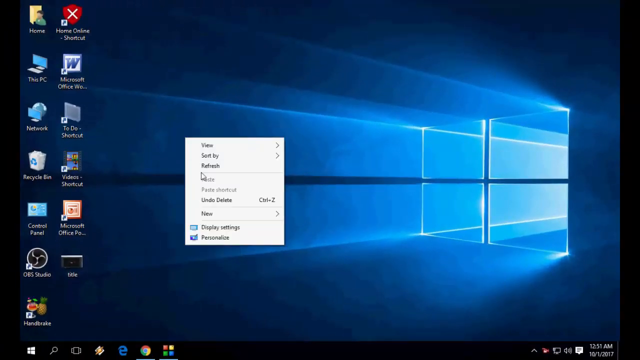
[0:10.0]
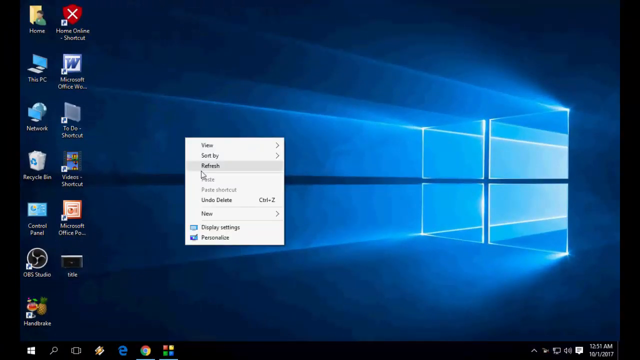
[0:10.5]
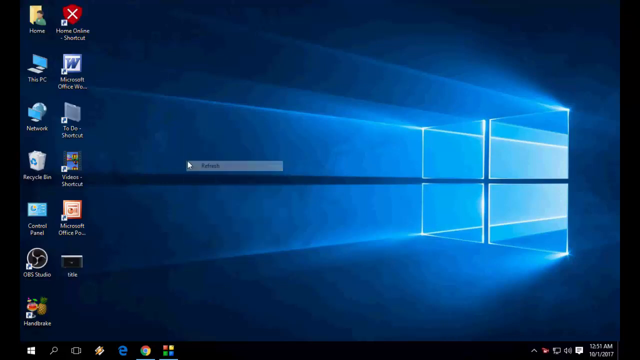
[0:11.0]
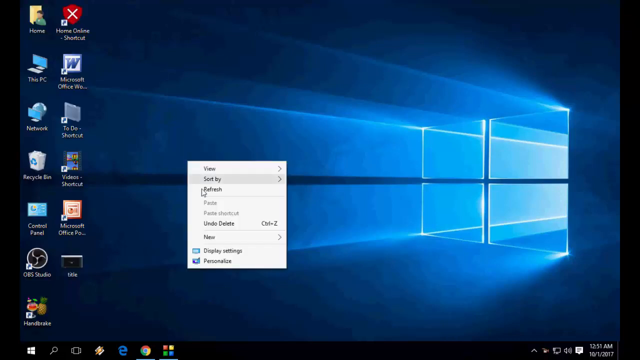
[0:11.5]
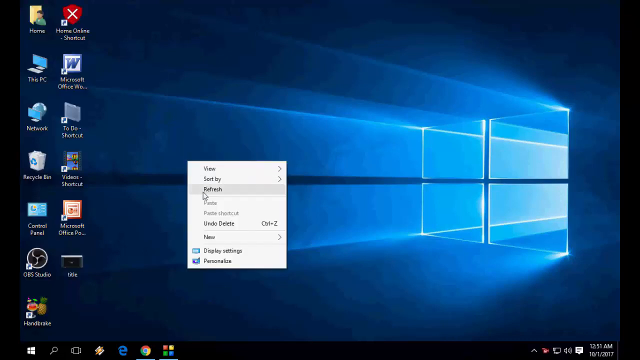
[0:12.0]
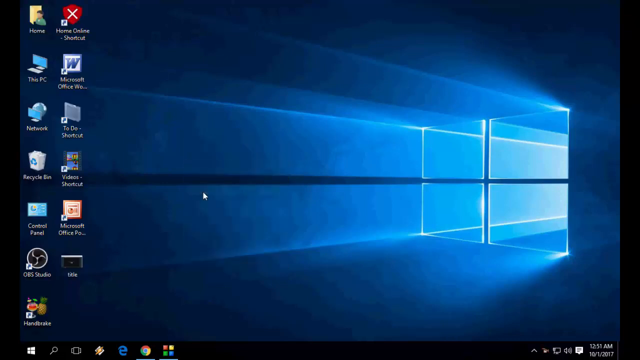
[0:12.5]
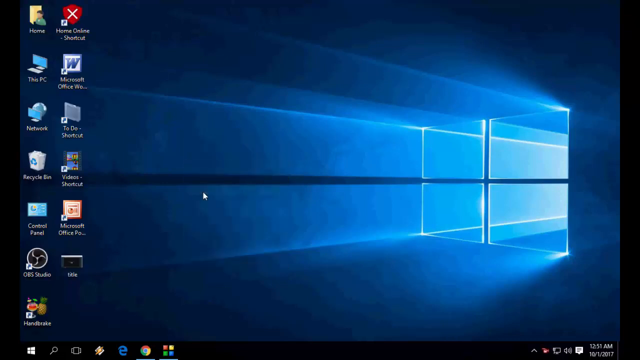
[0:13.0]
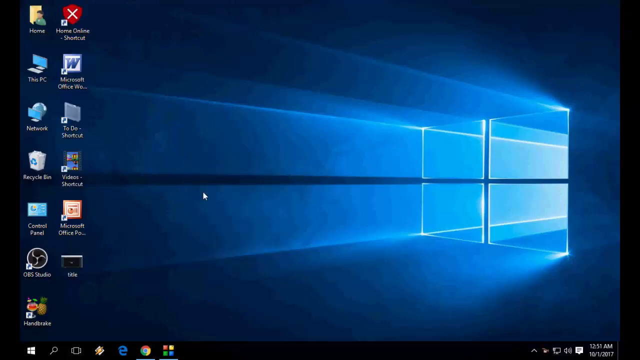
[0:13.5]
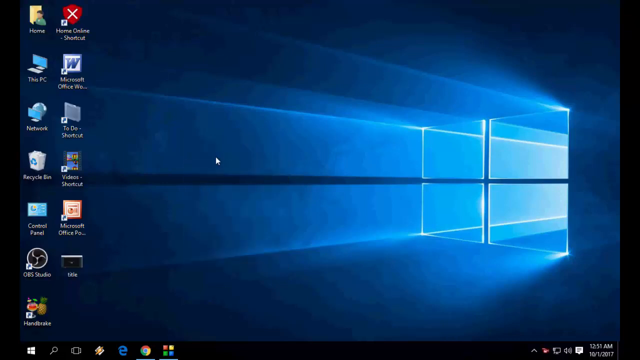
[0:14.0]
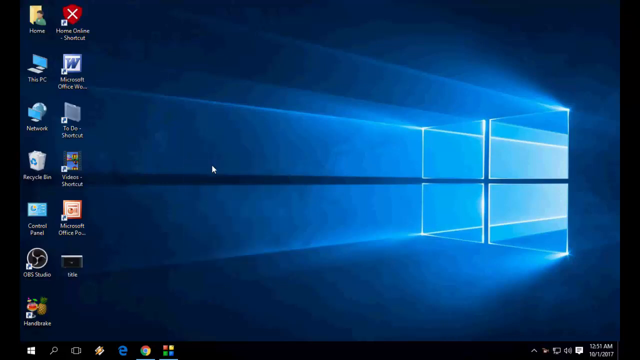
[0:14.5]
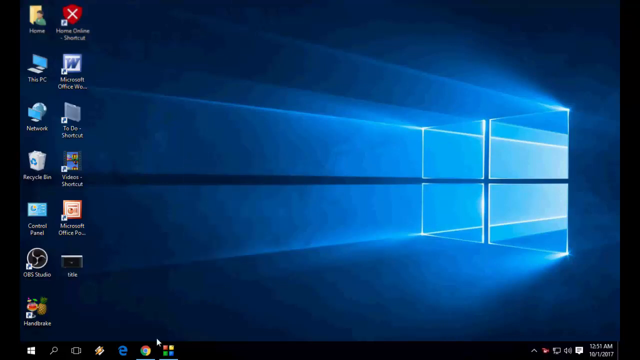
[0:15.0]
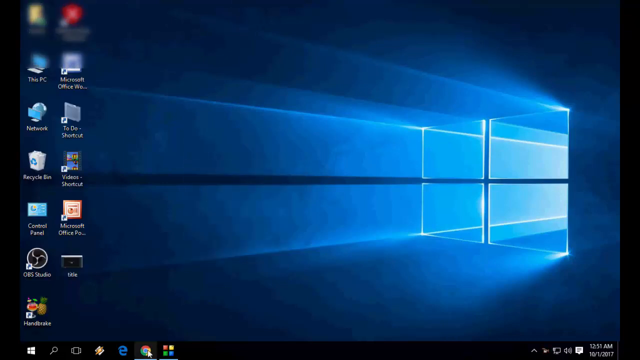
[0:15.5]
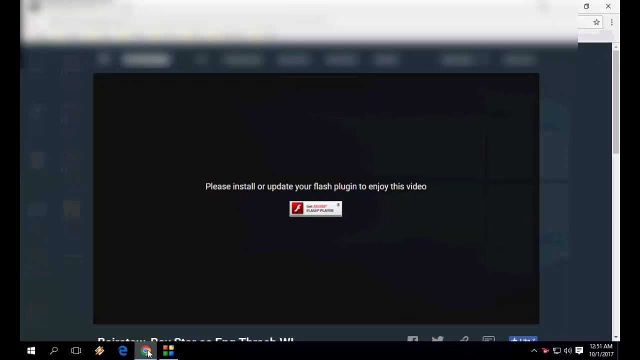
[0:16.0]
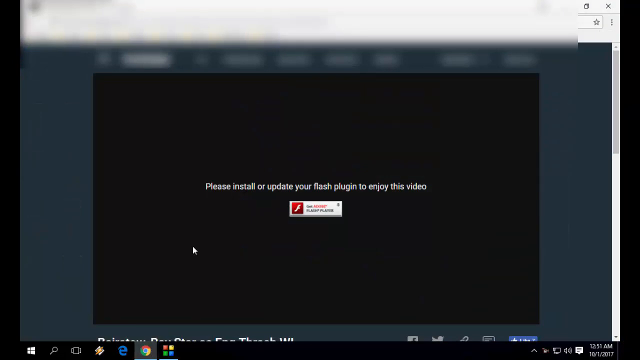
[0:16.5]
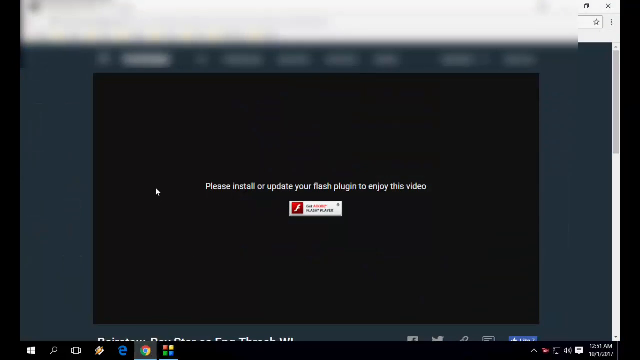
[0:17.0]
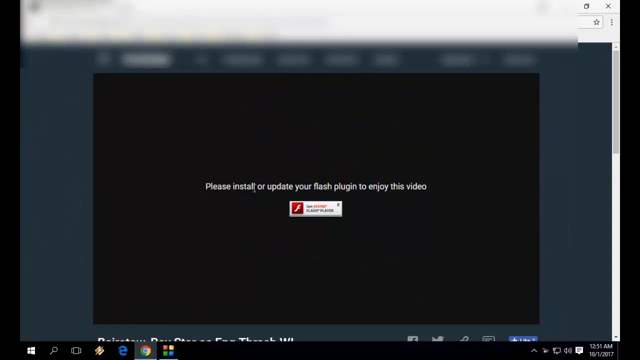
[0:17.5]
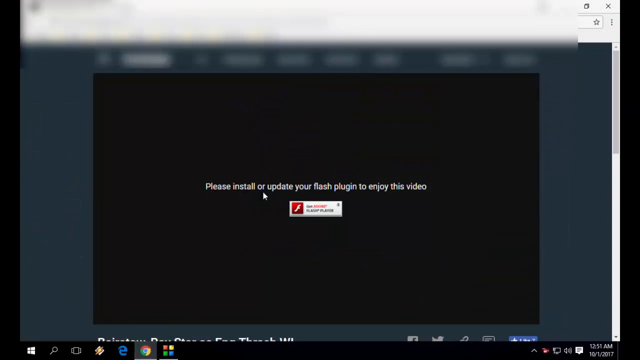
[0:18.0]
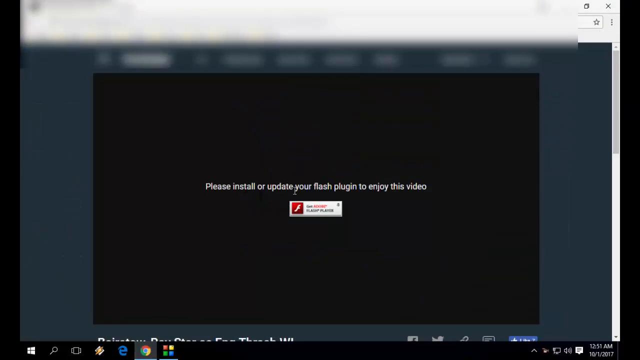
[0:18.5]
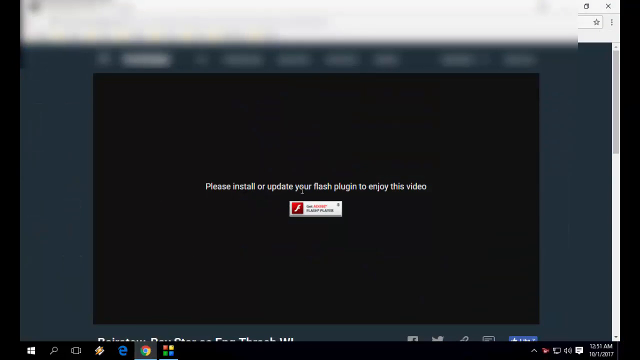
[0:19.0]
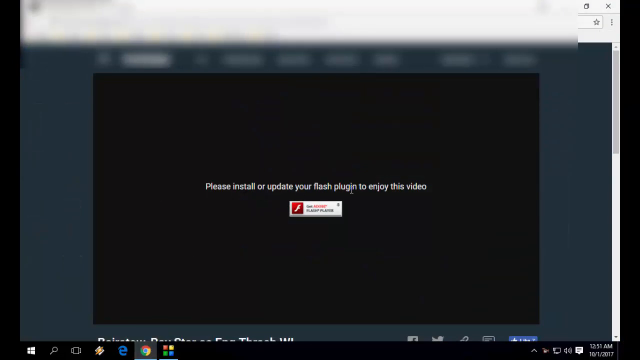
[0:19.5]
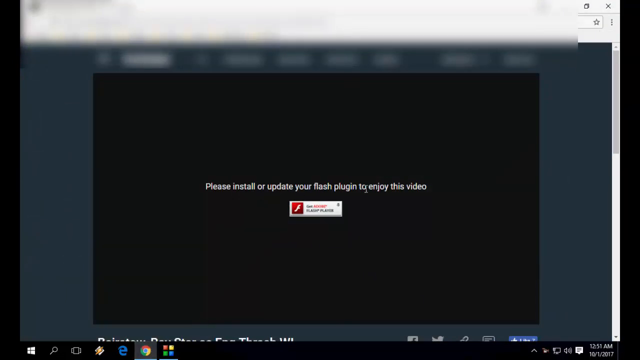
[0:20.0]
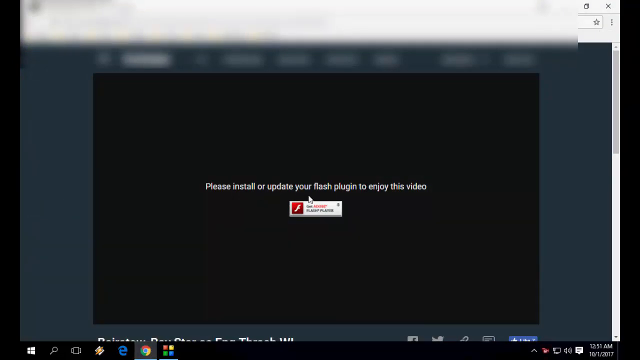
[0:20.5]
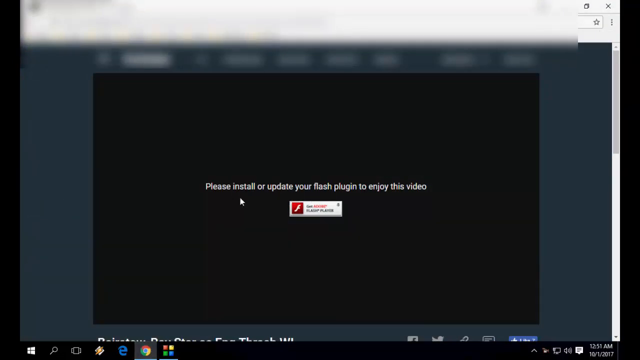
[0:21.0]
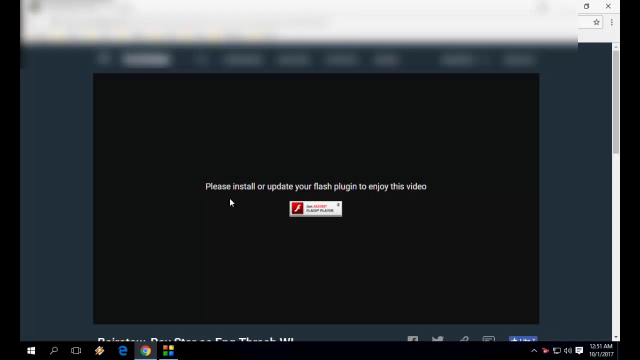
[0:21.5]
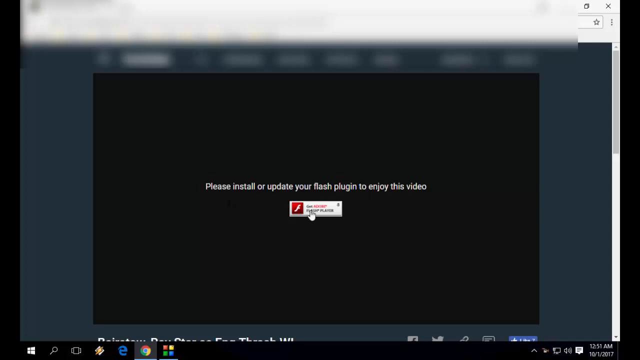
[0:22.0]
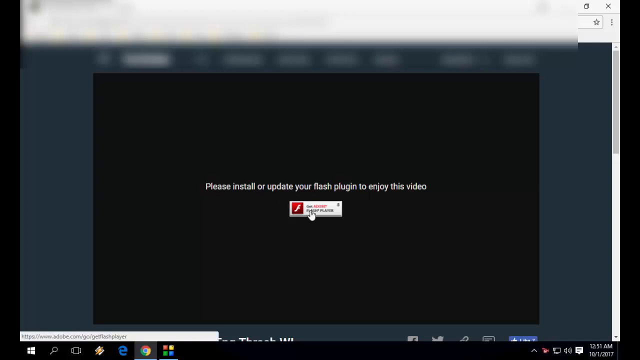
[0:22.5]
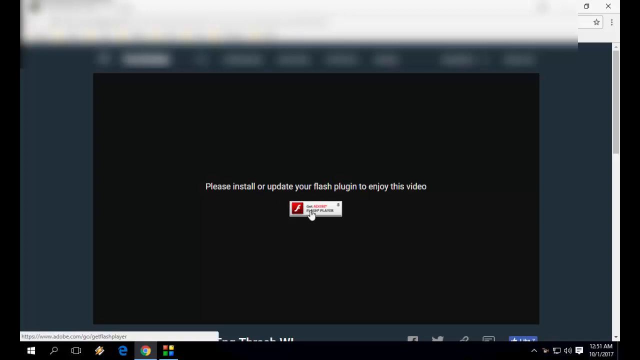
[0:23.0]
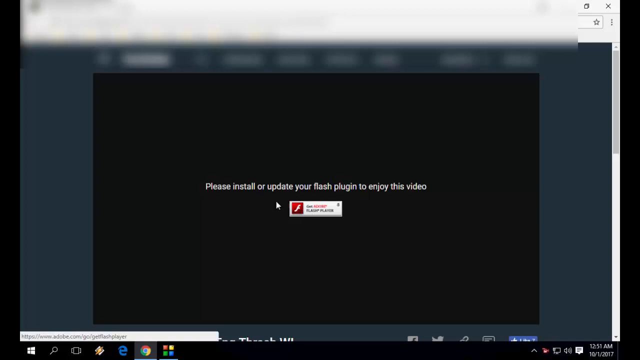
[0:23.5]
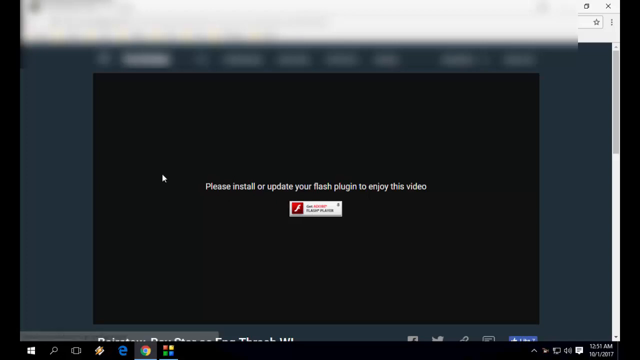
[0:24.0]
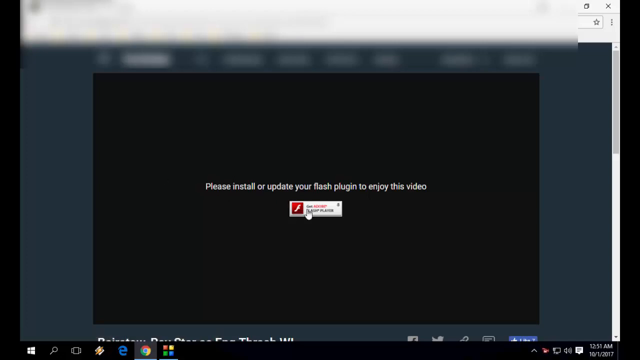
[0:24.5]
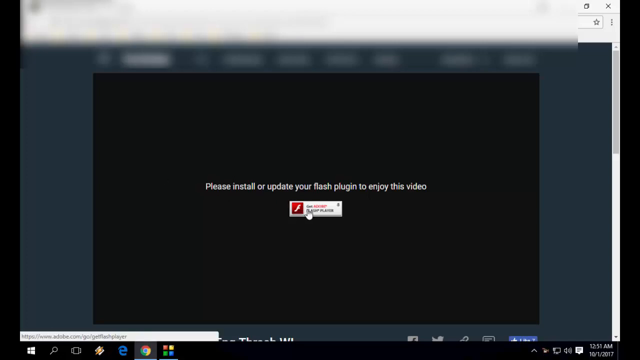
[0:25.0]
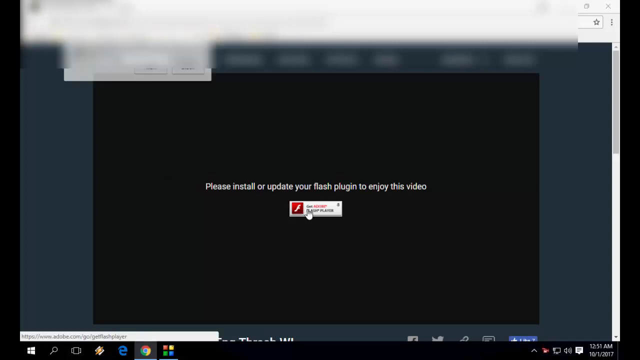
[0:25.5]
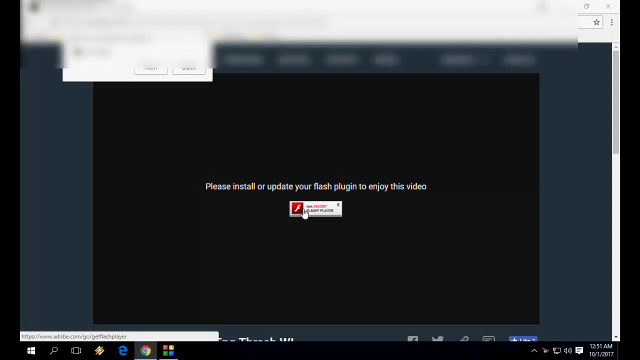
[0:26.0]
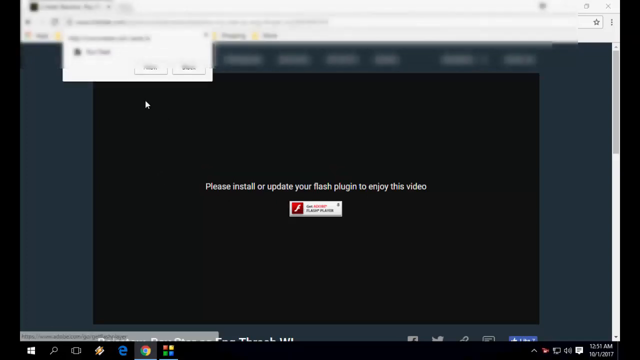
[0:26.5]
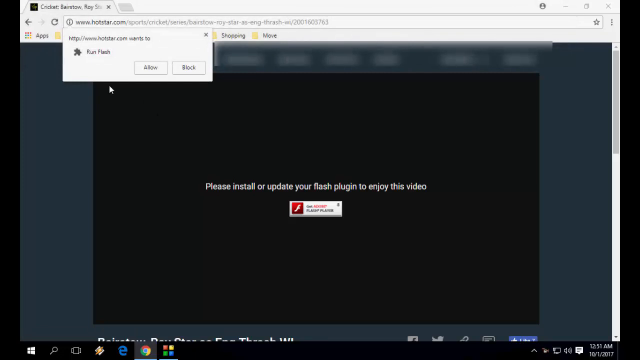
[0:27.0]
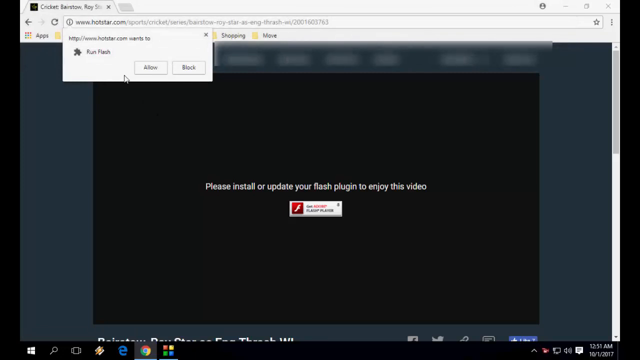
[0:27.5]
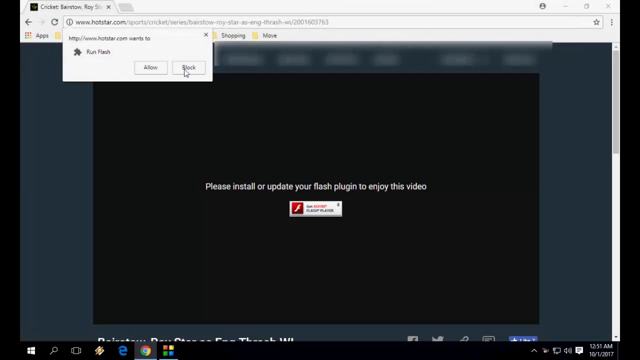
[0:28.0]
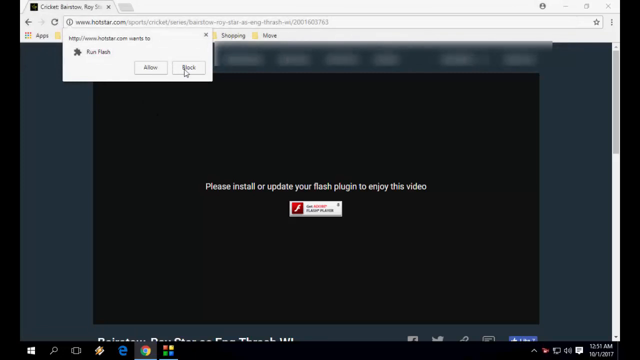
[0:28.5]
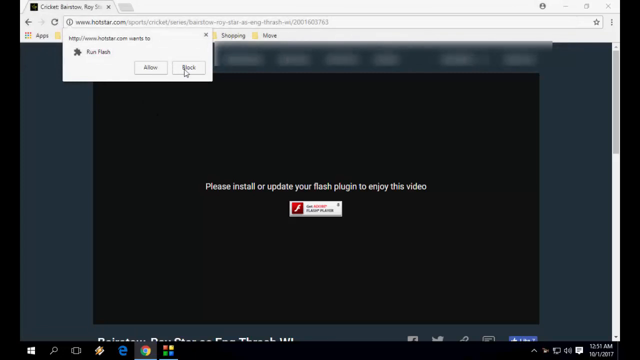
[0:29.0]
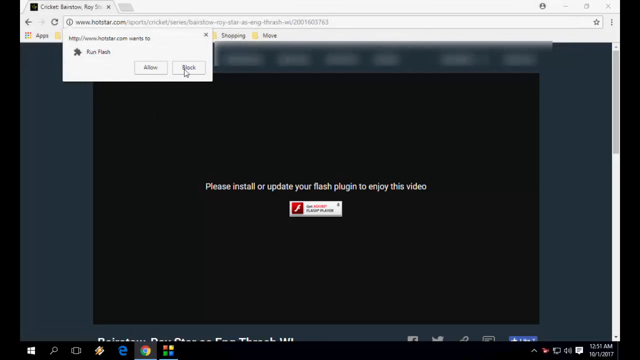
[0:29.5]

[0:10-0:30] This is probably the second part of a video in which MJ Tube shows how to install or update the Flash plugin to watch videos using an Adobe plugin. The details and text are clearly visible. He changes the settings to allow or block the plugin, then shows how to refresh the screen, going through the process step by step.